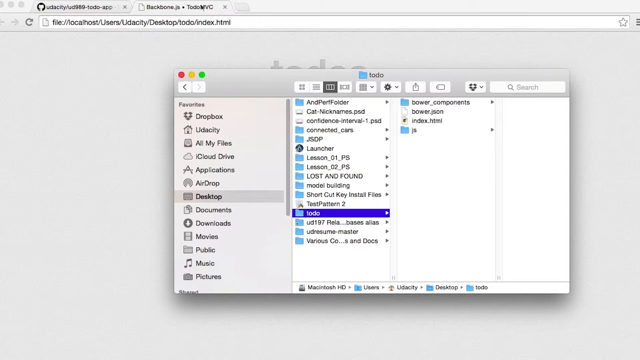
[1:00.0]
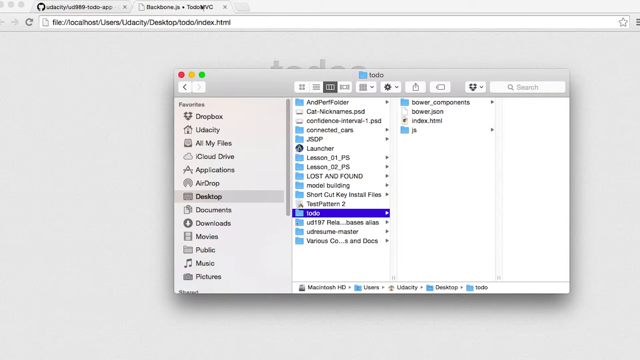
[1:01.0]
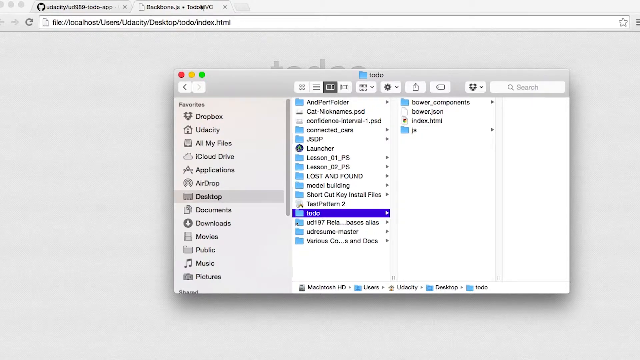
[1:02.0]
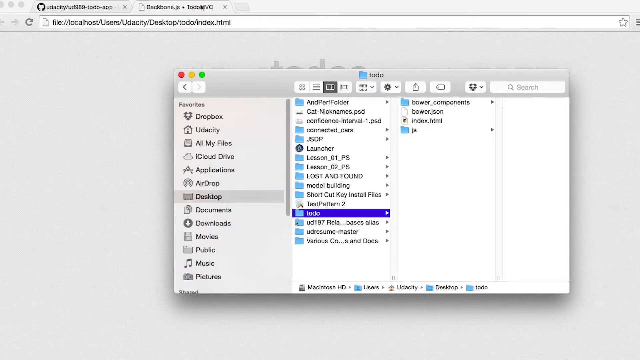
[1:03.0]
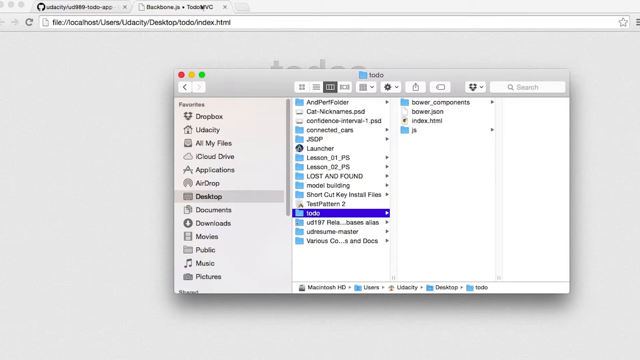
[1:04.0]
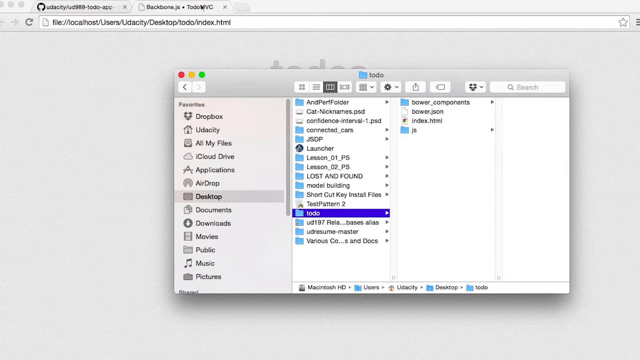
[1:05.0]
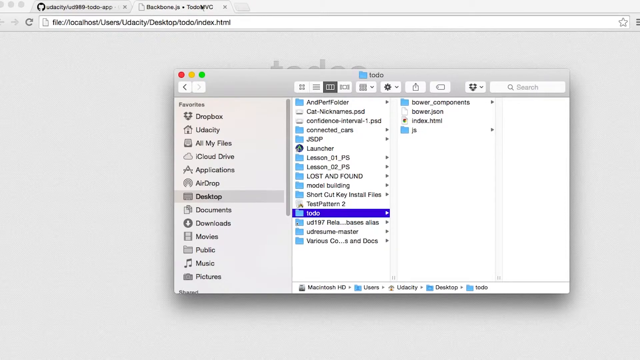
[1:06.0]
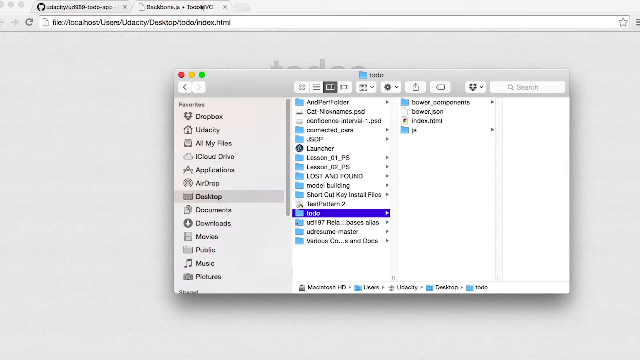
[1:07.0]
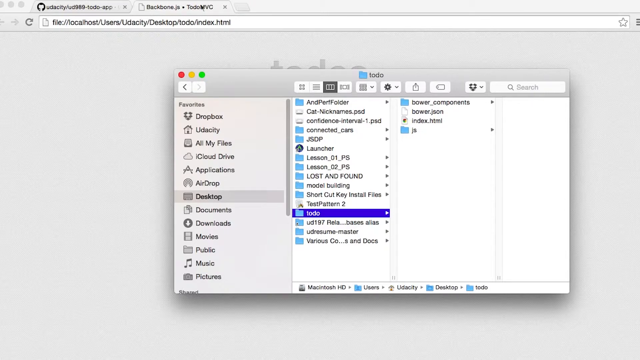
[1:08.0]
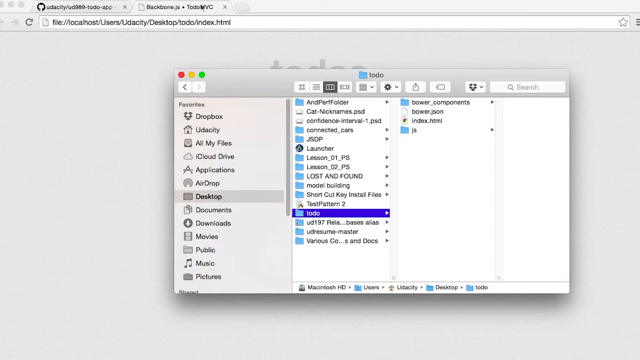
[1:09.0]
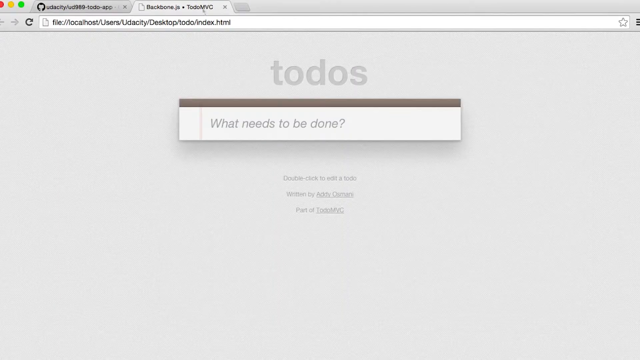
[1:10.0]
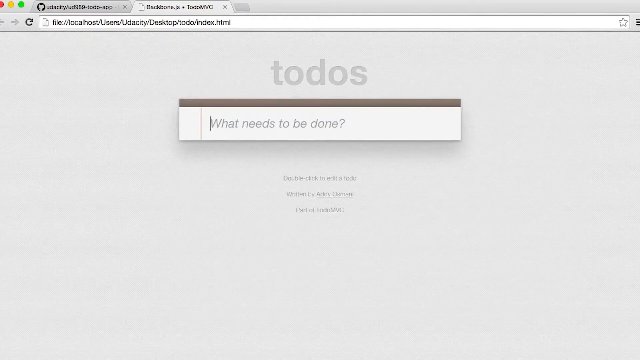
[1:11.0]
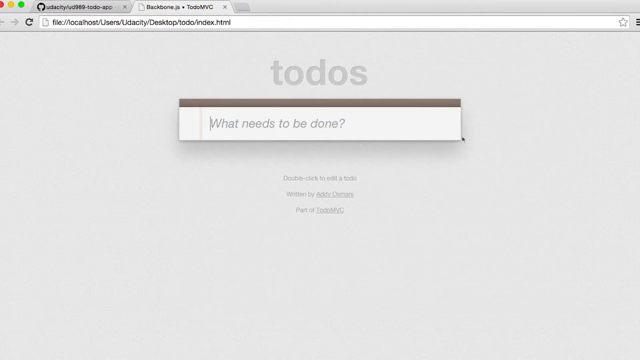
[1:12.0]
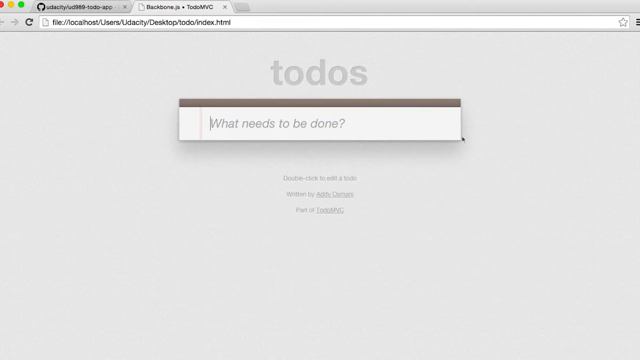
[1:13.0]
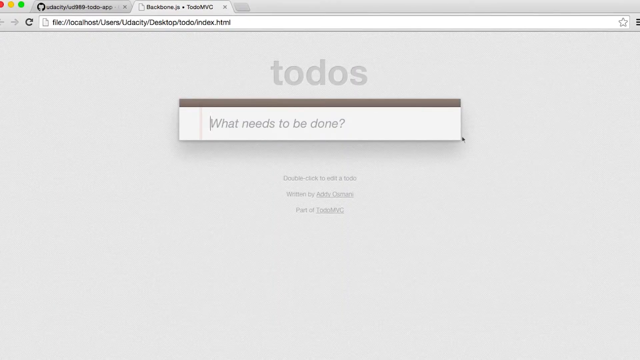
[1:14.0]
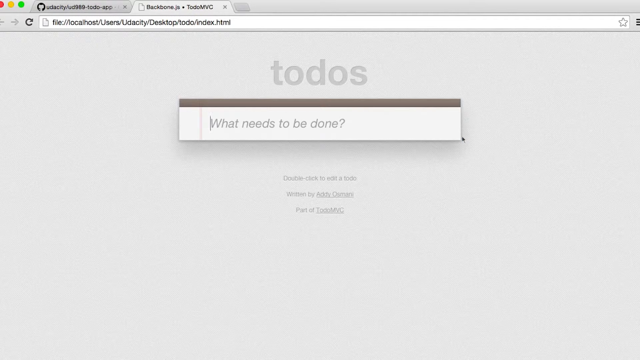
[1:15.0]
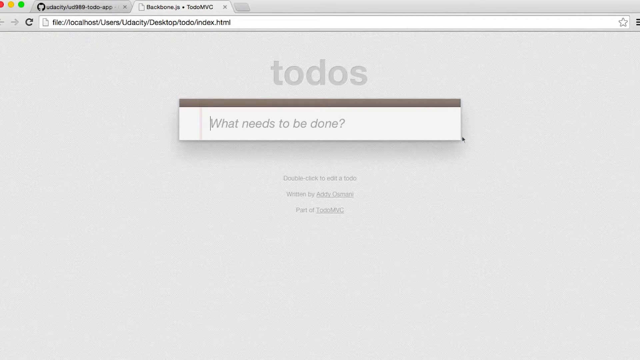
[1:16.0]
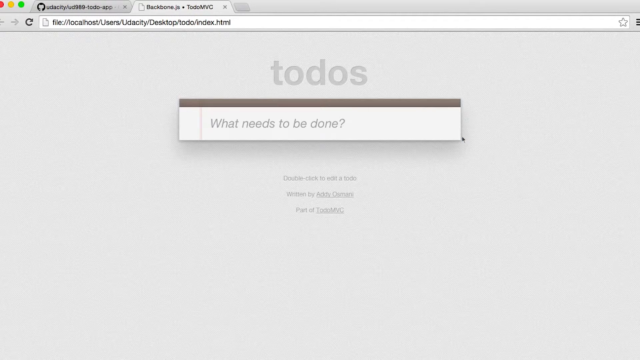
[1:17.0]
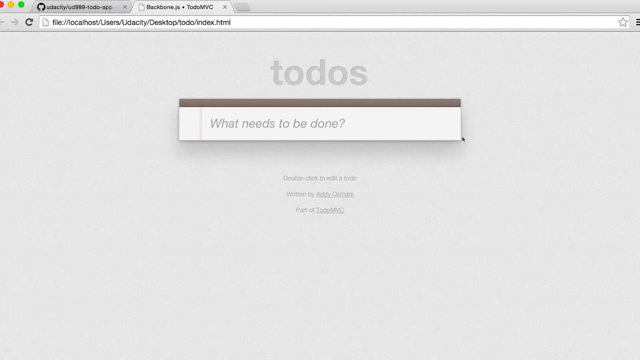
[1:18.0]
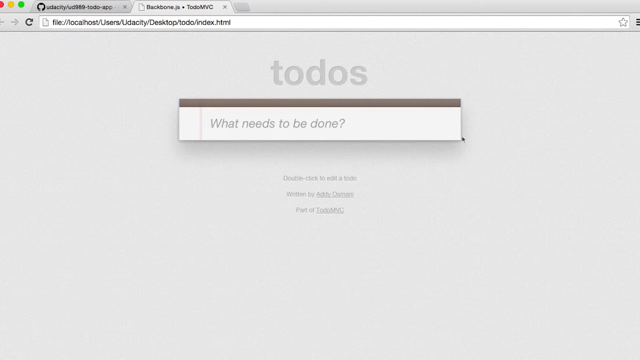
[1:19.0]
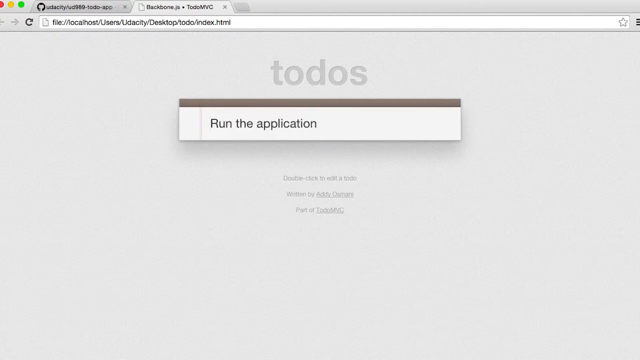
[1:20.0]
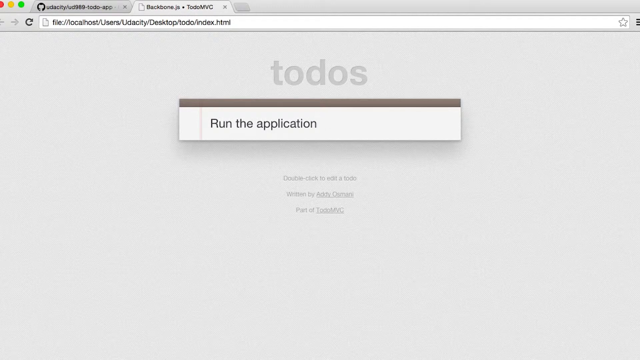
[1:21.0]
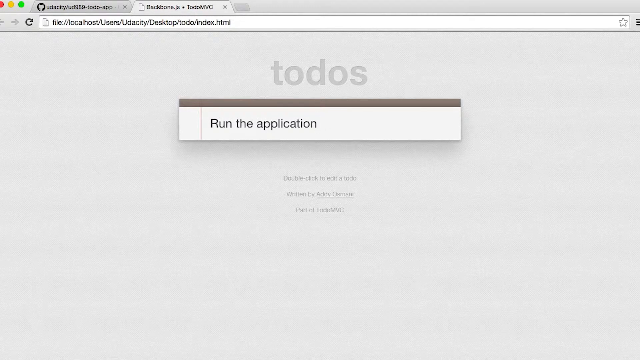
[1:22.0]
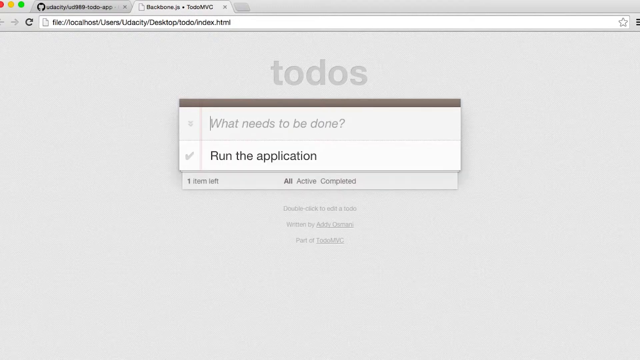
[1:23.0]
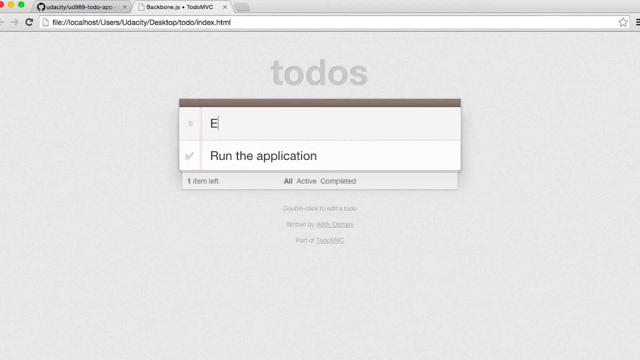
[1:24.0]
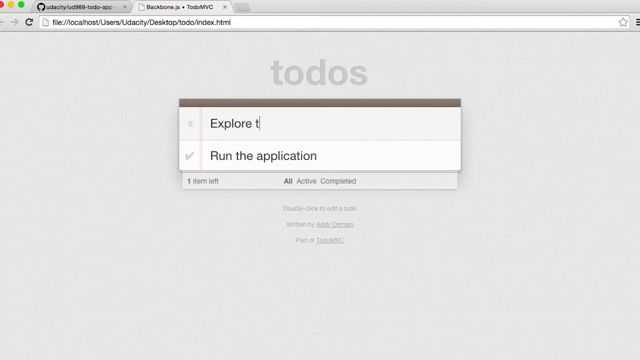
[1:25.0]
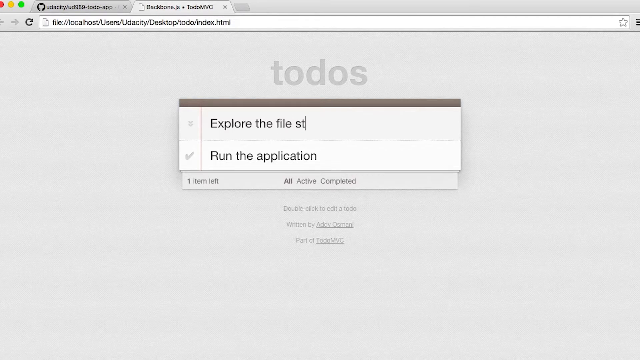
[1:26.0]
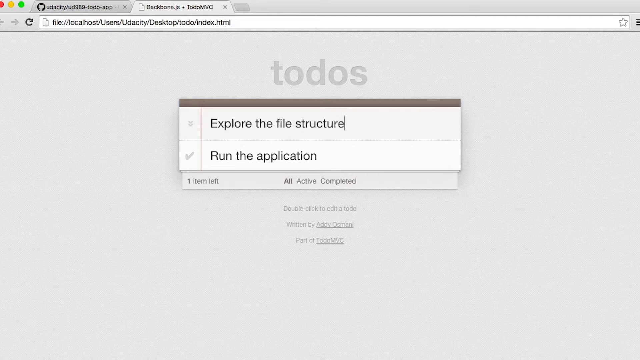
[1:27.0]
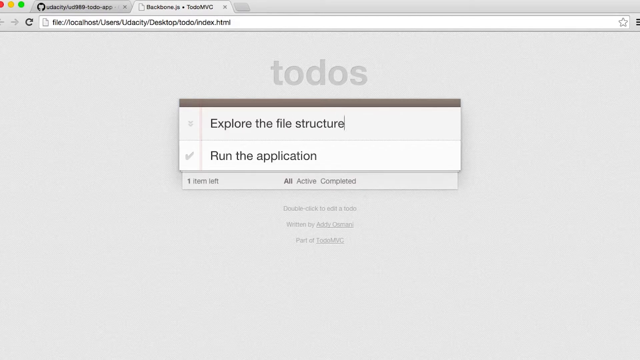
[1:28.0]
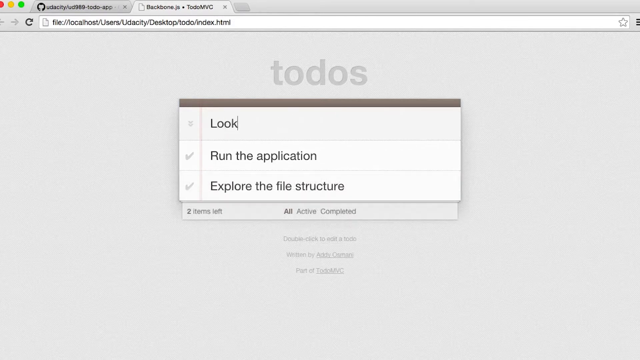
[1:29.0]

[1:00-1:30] The browser is open with two tabs, one leading to GitHub and one leading to a local host file. The To Do folder is still shown on screen and is then minimized, revealing the localhost tab. The localhost tab shows the words "to-dos" and below that "what needs to be done". On the line that says "what needs to be done" there is a blinking black line indicating that something can be typed there. Those words are then changed to "run the application" in a brighter black color, with the blinking line now at the end of the words rather than the beginning. "Run the application" then appears below the line, "what needs to be done" pops up again, and the words "explore the file structures" are typed, followed by "look at what js".